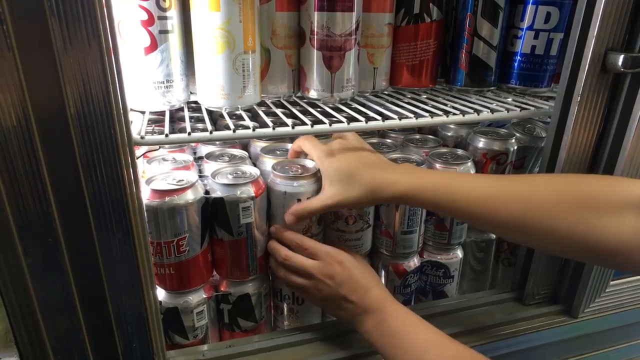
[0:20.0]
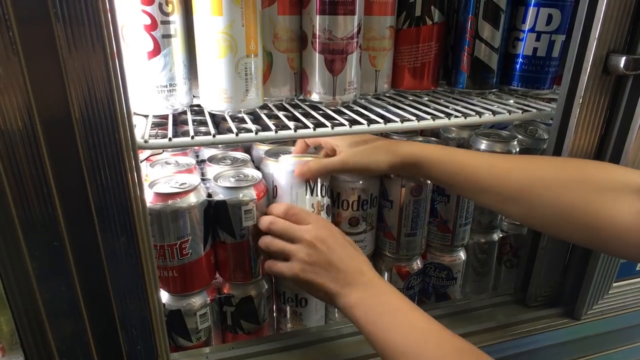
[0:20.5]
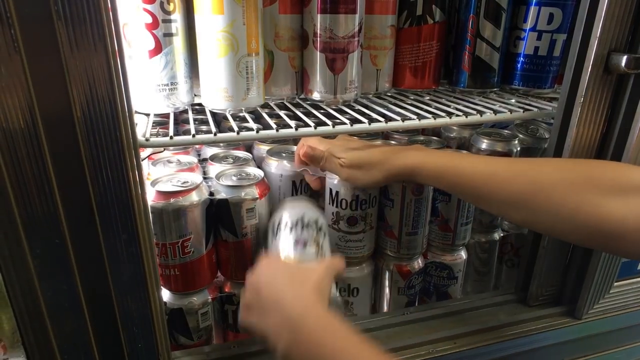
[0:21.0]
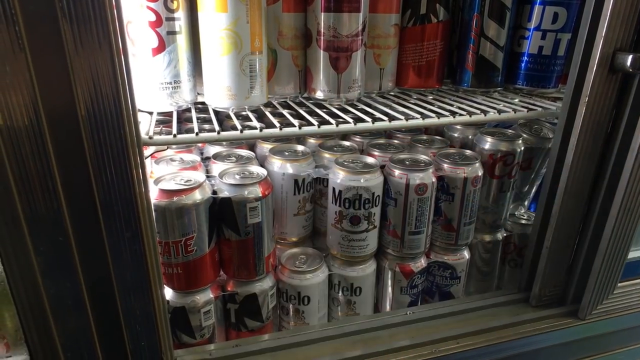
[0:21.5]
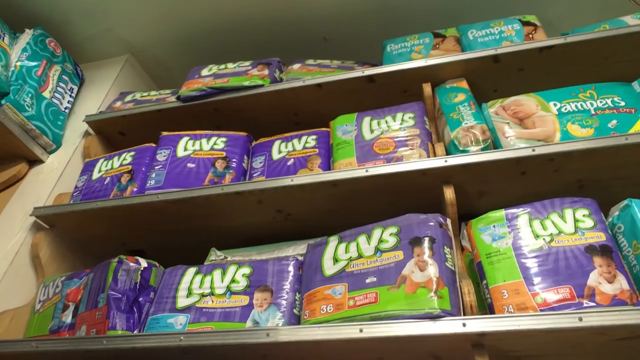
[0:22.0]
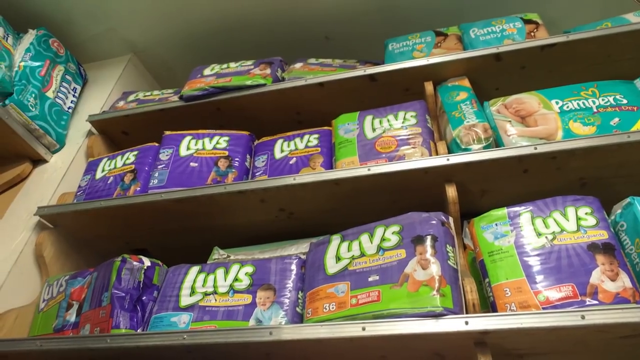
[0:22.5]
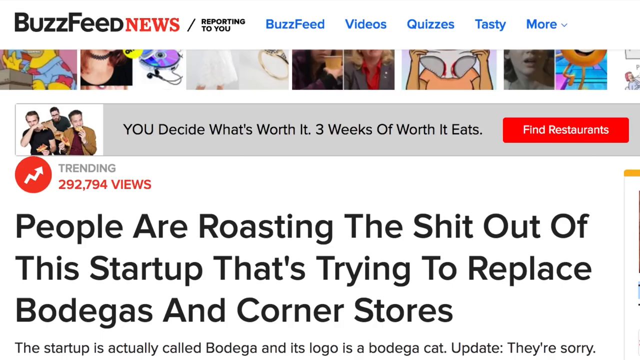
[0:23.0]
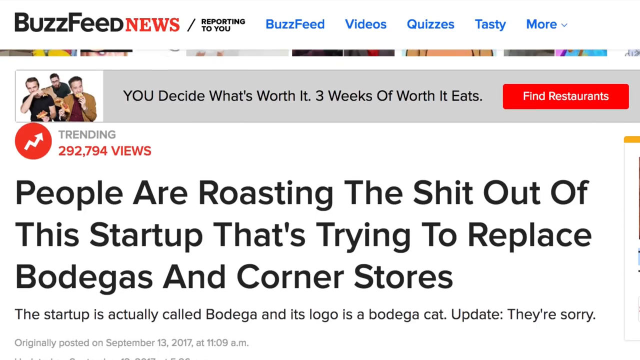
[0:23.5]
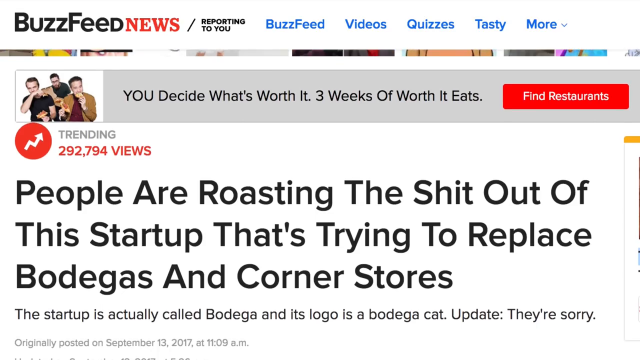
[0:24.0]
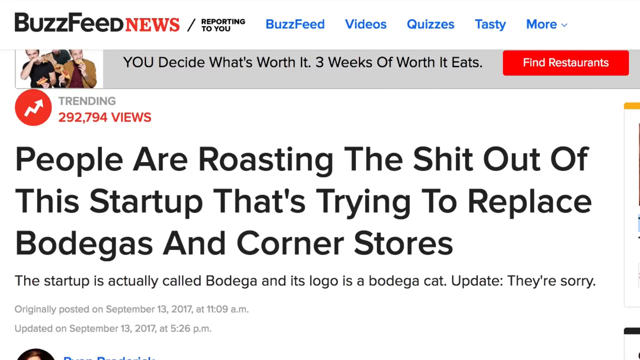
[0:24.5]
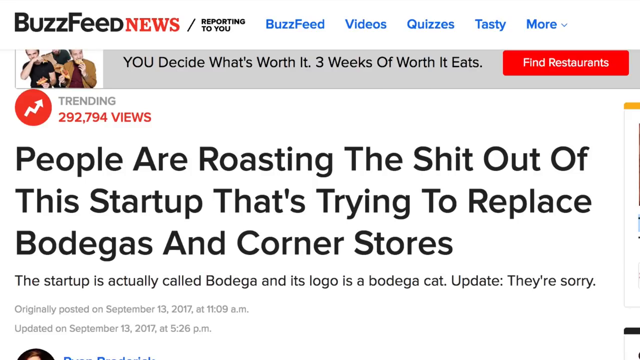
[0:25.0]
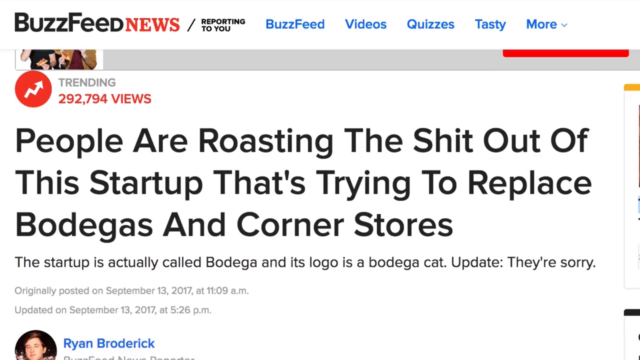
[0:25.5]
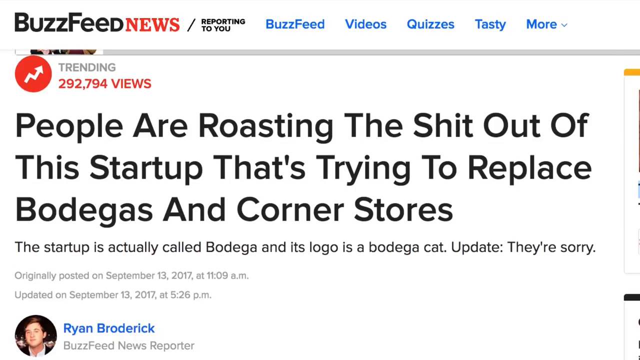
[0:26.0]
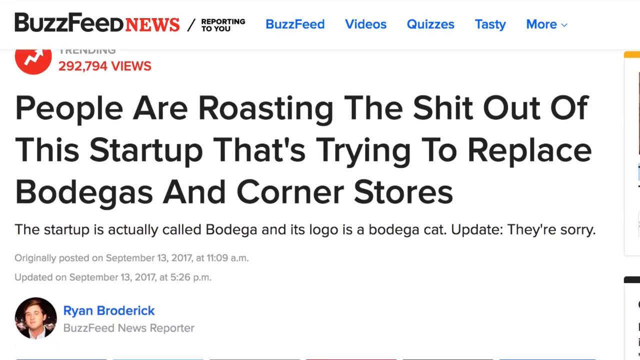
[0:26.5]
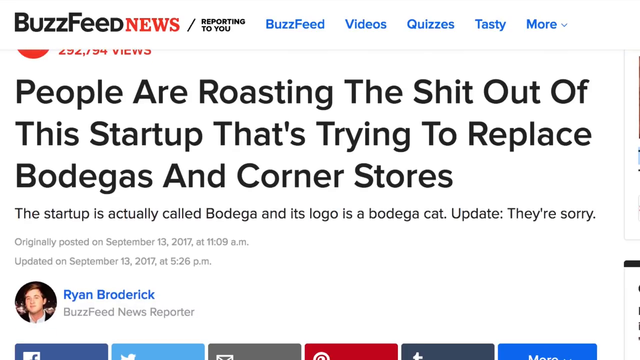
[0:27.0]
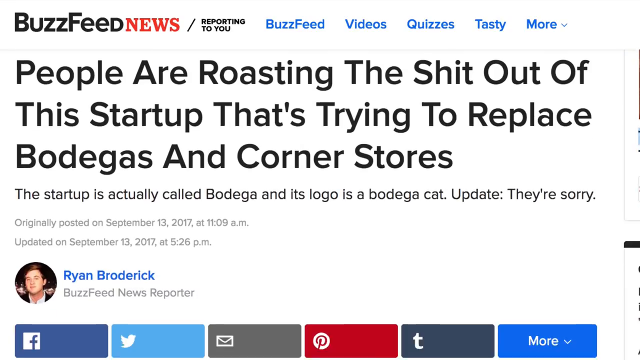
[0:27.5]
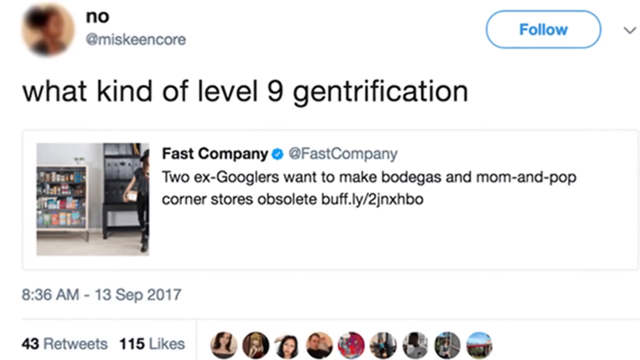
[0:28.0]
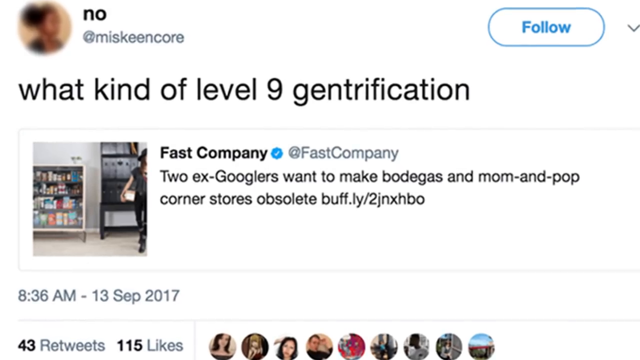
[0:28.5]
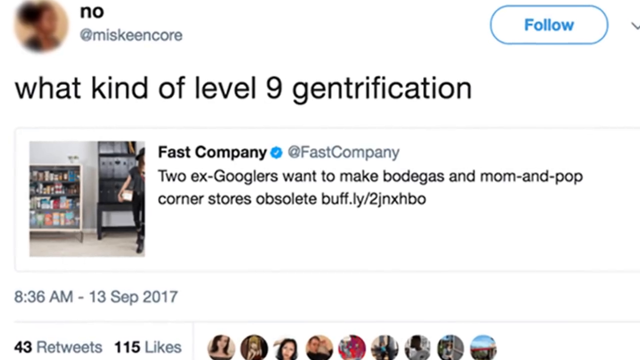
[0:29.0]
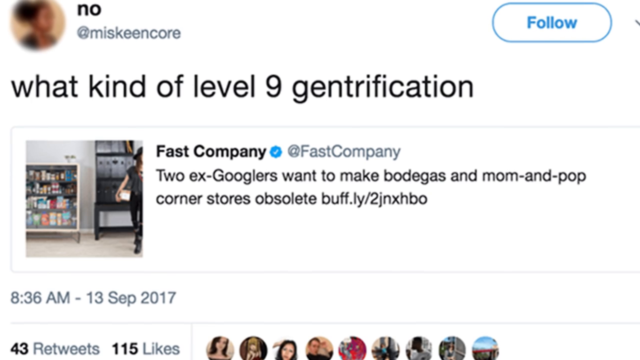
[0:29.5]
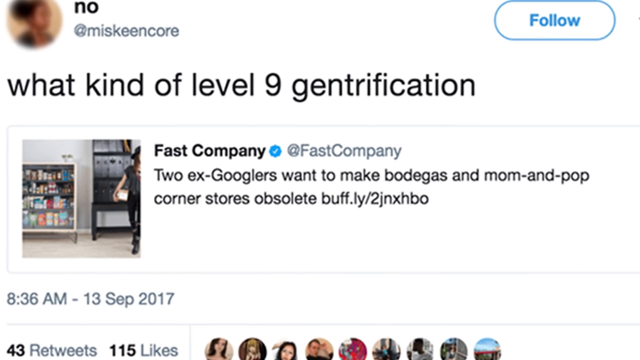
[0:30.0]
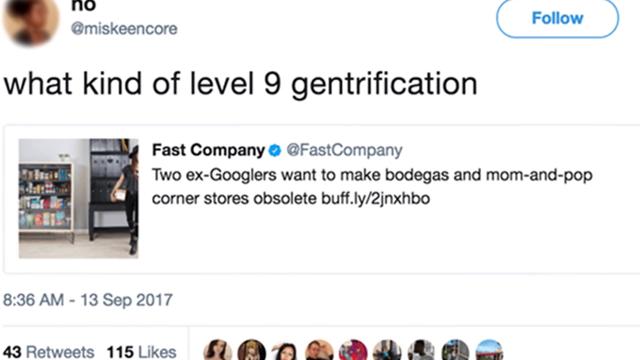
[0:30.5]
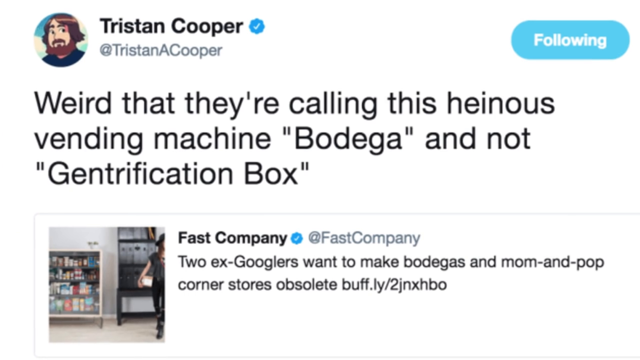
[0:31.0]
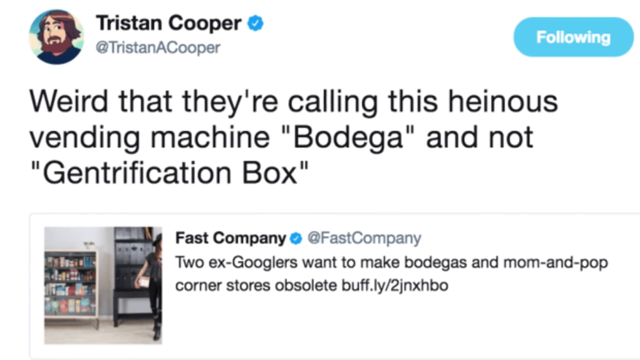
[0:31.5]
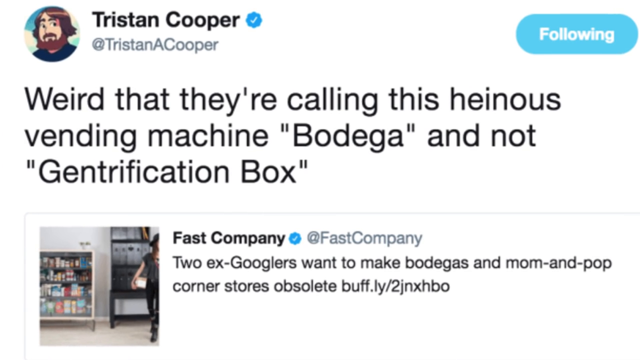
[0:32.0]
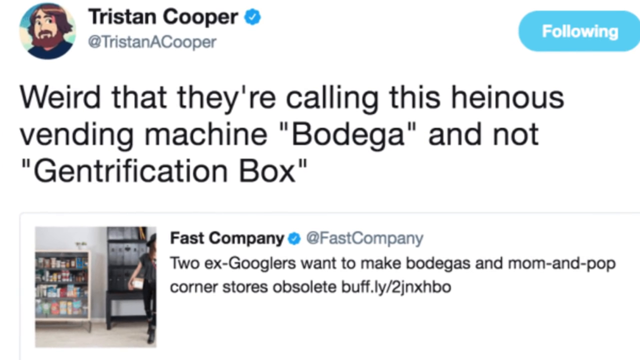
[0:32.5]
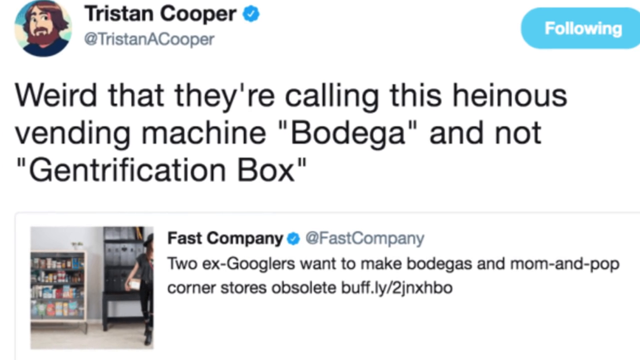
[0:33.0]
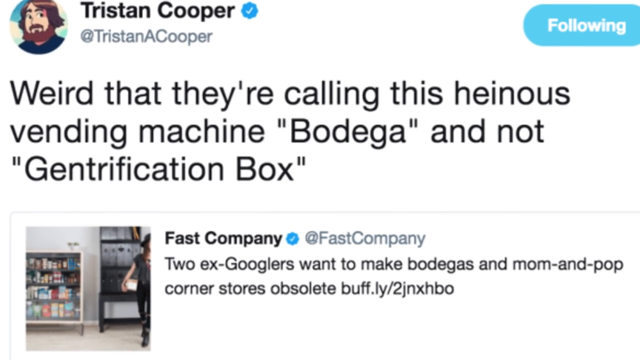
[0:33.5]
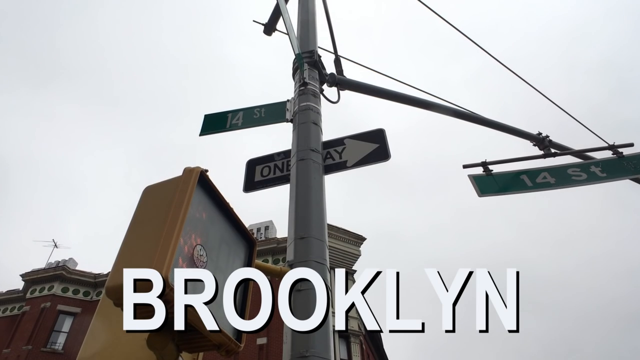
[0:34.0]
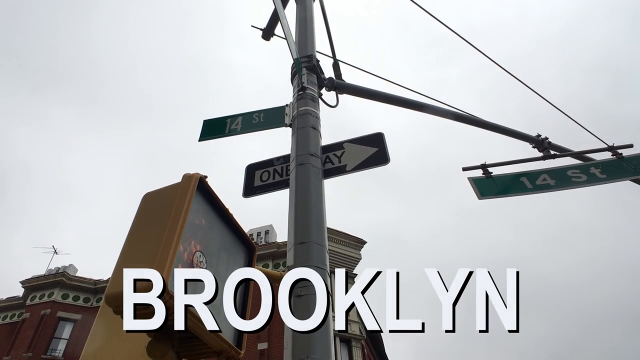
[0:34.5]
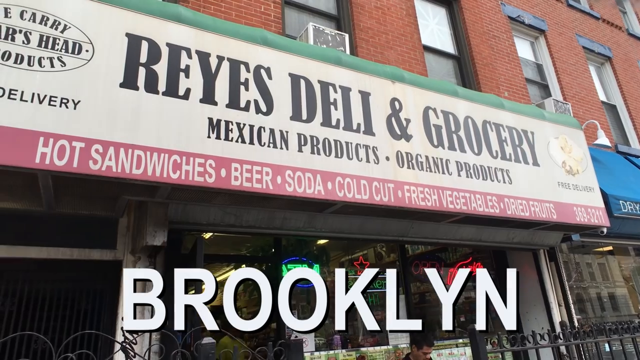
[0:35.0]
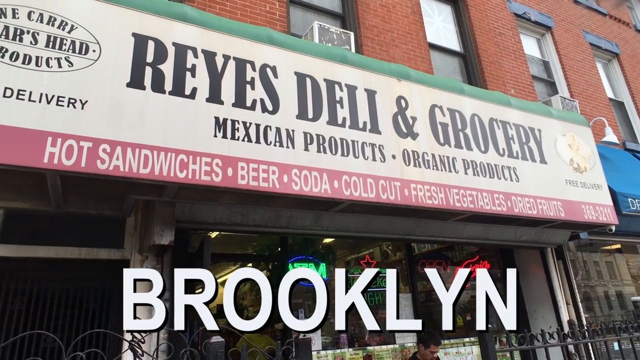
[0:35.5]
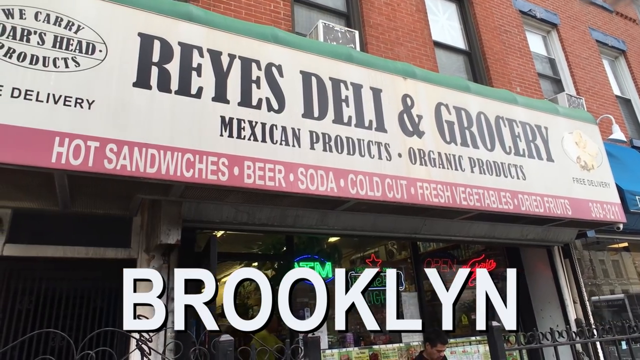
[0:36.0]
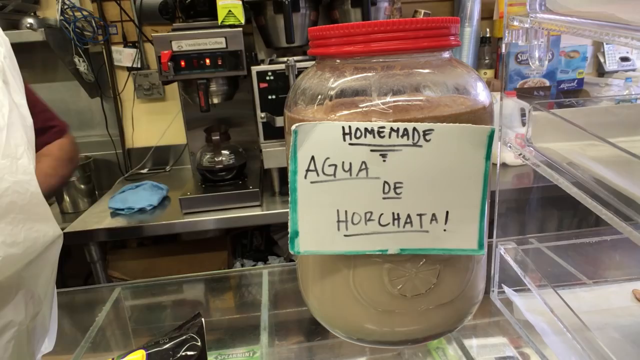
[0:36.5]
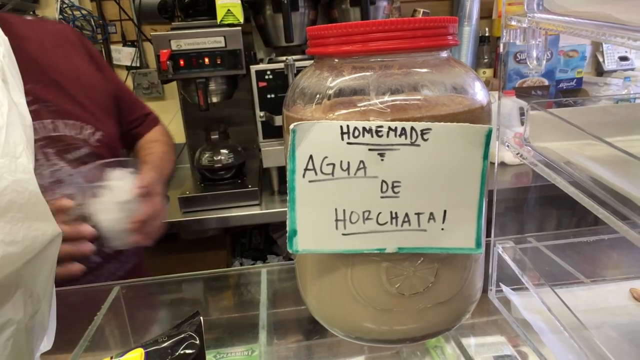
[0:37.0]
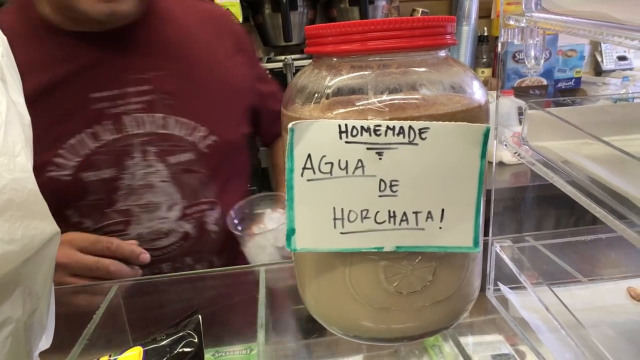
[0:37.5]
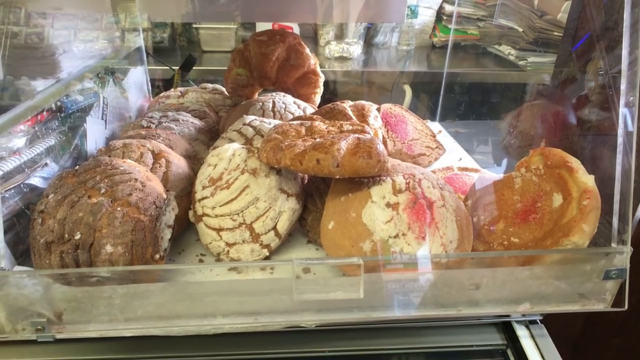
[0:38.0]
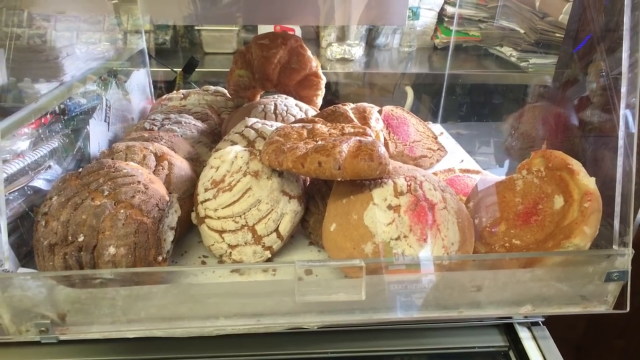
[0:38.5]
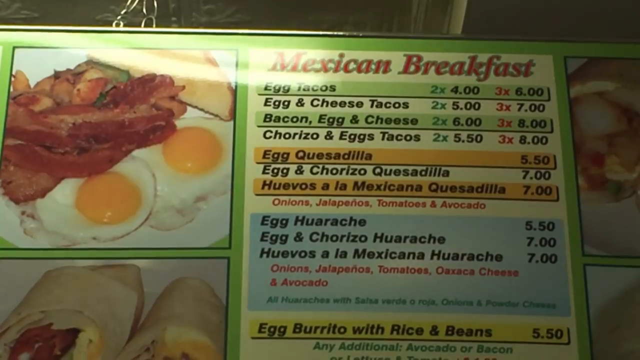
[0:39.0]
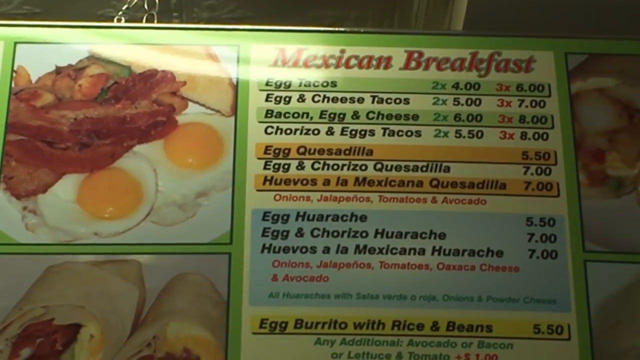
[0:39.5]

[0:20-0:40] A person puts cans inside a fridge and takes one out, and other items appear that look like biscuits. The scene shifts to a BuzzFeed News report on a white background, showing "292,794 views" and "trending" in red, with the headline "people are roasting the shit out of this startup that's trying to replace bodegas and corner stores". The screen swipes up to a tweet by misskin core that says "what kind of level 9 gentrification", followed by a response from Tristan Cooper. "Brooklyn" appears on screen in capital letters. Then Race Daily and Grocery is shown with "Mexican products" and "organic products", along with homemade items and cakes that appear to be homemade. A greenish Mexican breakfast board shows pictures of breakfast on it.